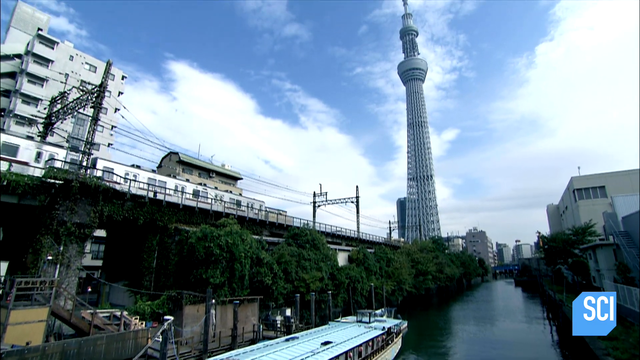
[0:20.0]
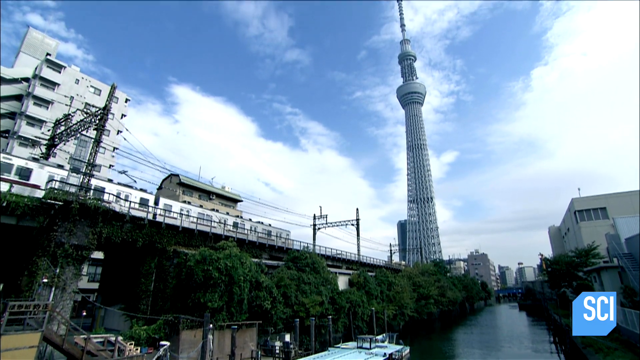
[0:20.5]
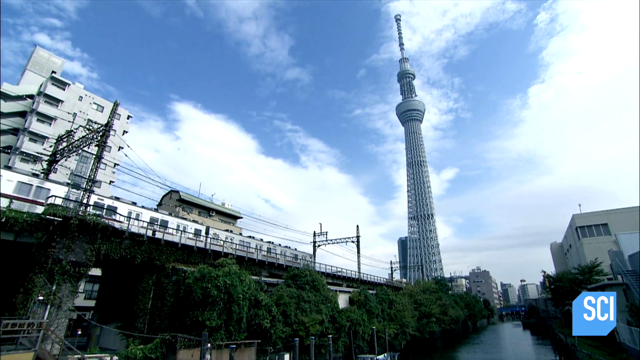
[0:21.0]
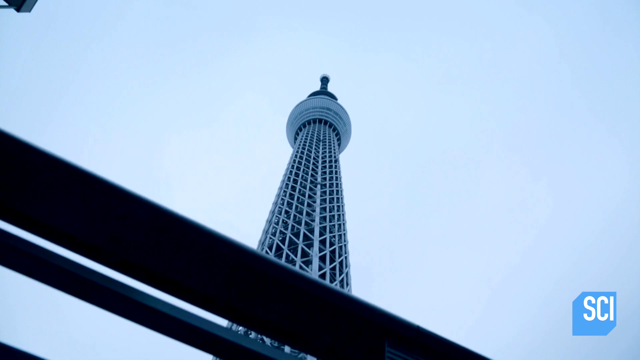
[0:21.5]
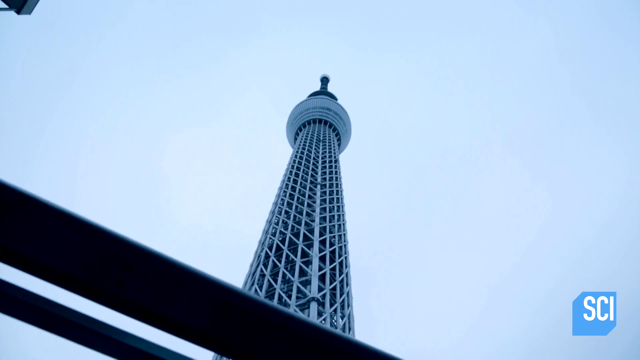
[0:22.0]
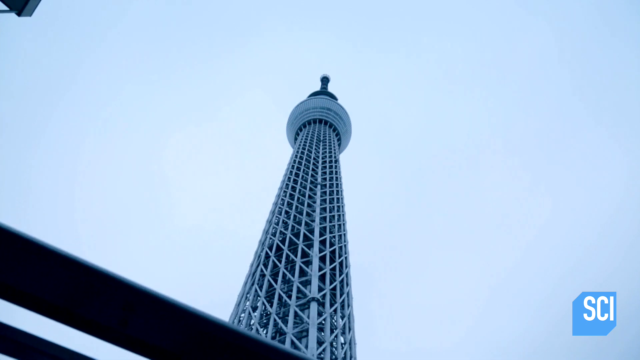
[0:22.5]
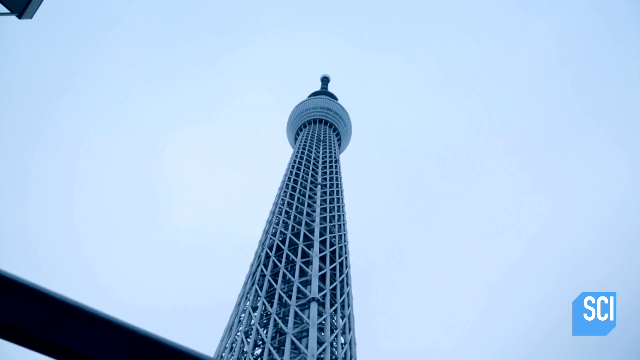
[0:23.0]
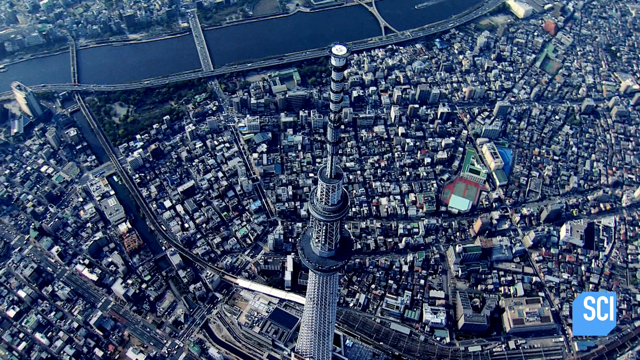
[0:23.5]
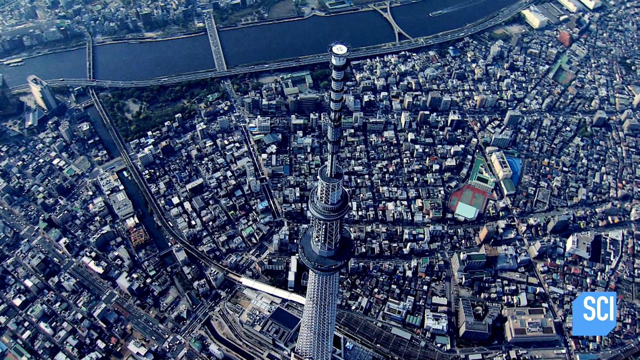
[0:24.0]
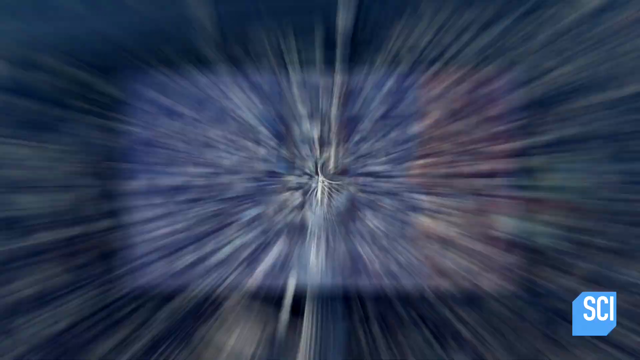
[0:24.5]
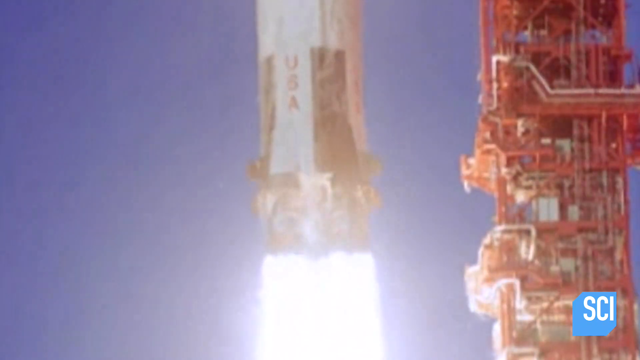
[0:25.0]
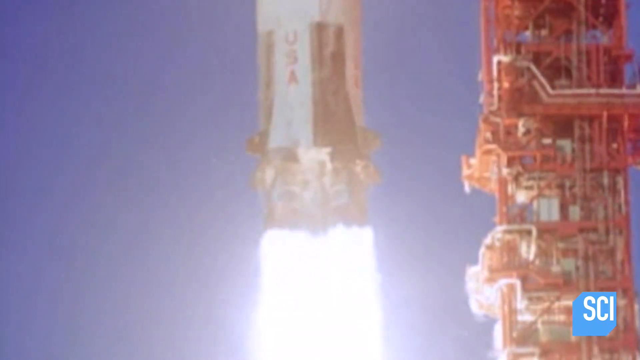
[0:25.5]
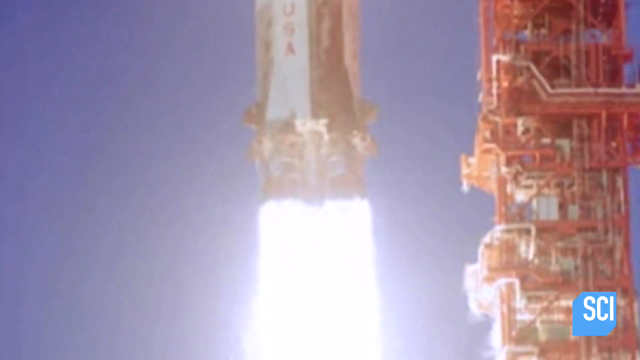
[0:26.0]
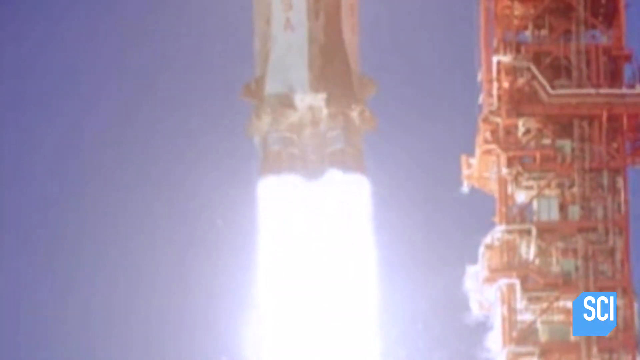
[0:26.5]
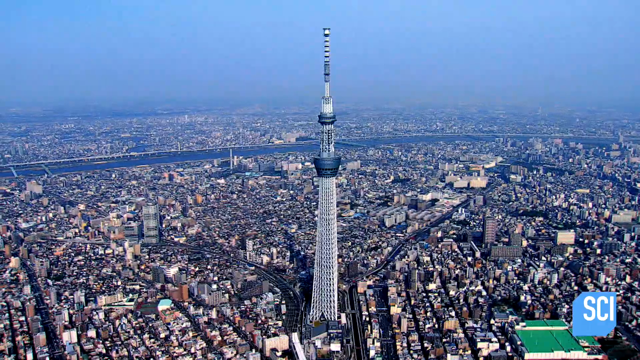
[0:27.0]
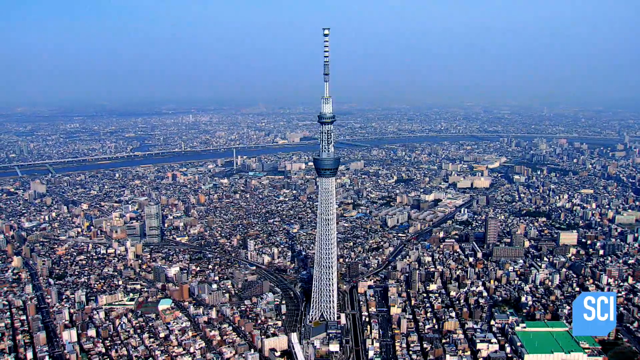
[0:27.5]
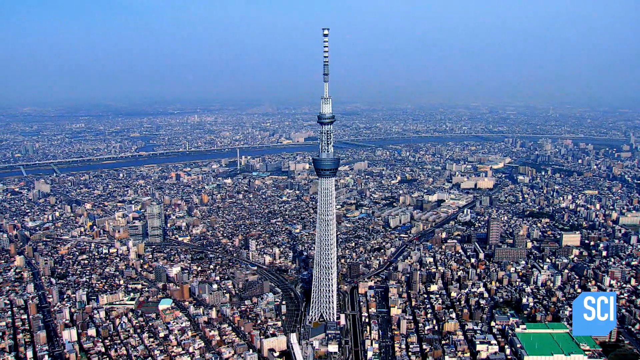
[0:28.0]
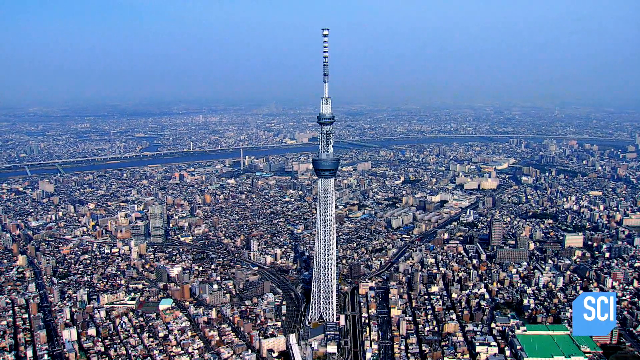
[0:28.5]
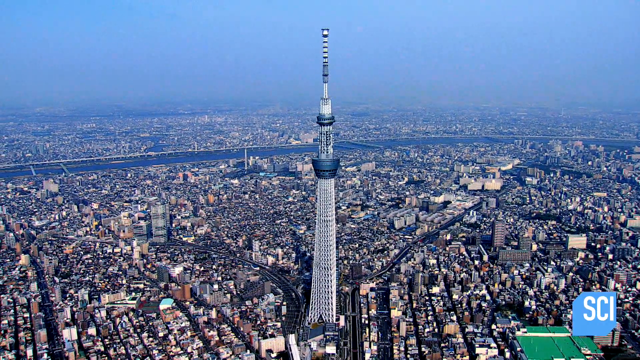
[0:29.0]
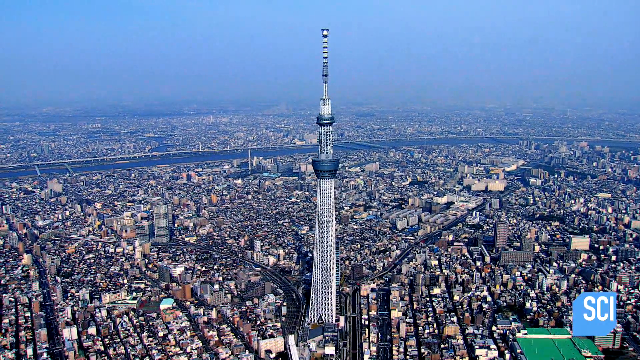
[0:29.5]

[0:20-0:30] A far-out view of the city shows its skyscrapers, with one building that towers over the rest and is the biggest thing in view. Other shots show the building from around the city as people would see it, including a train passing by and a view from underneath the building that shows how enormous it is compared to the rest of the city. At the very end, a USA rocket ship blasts off into space.